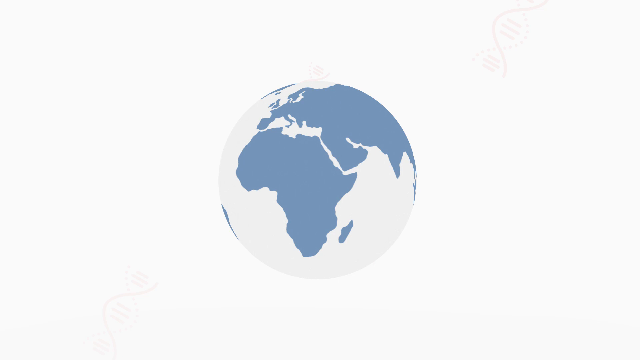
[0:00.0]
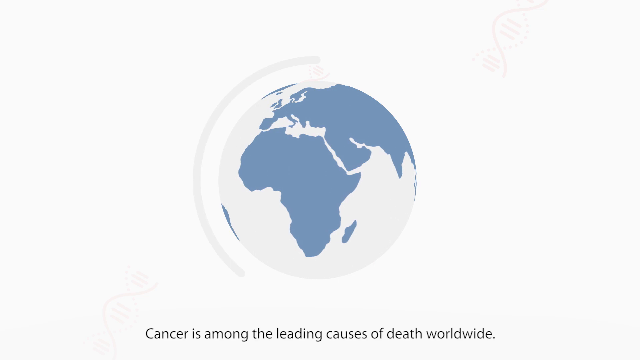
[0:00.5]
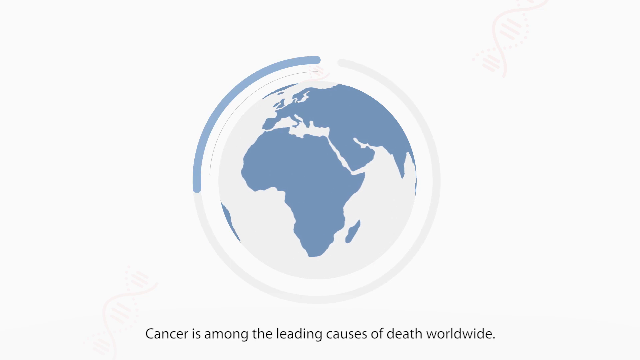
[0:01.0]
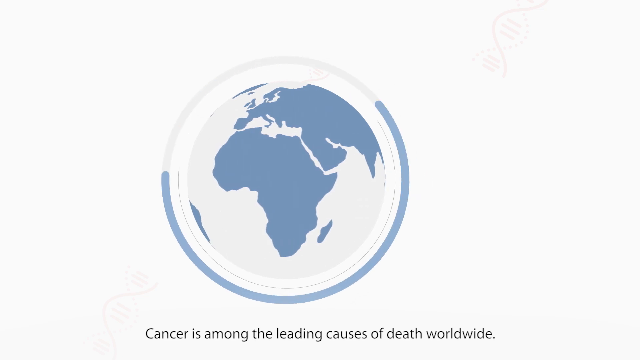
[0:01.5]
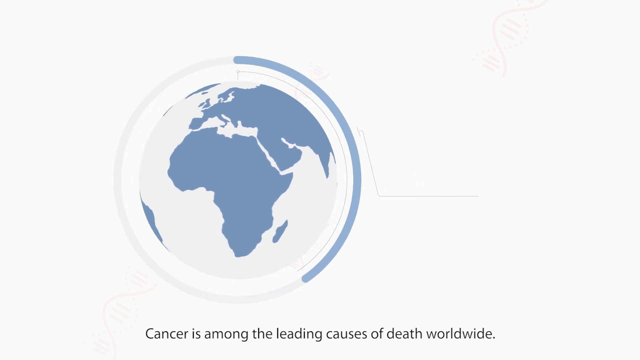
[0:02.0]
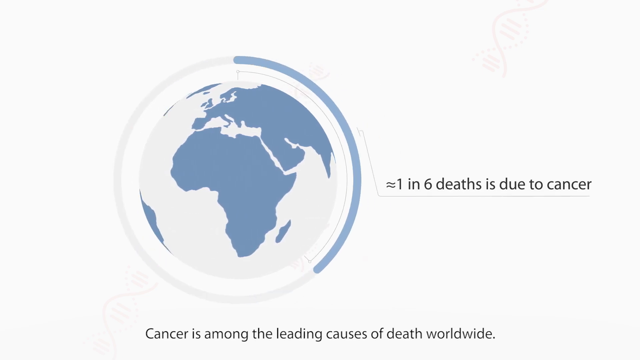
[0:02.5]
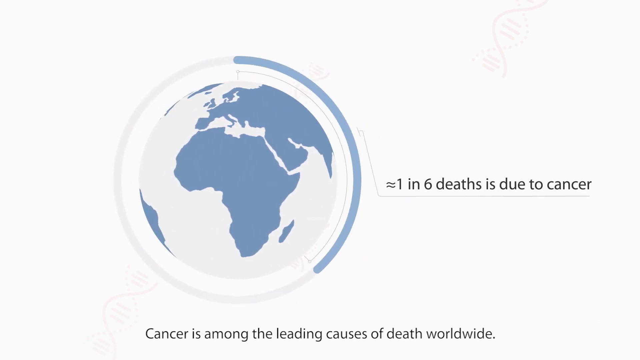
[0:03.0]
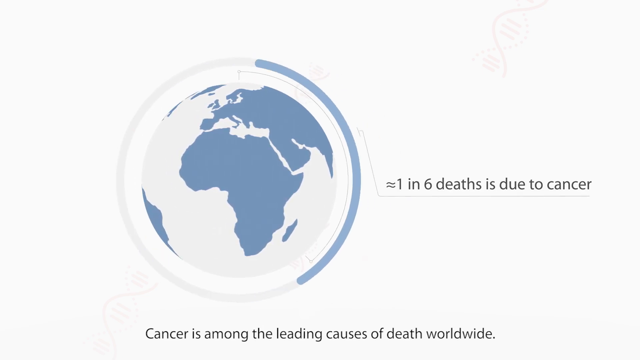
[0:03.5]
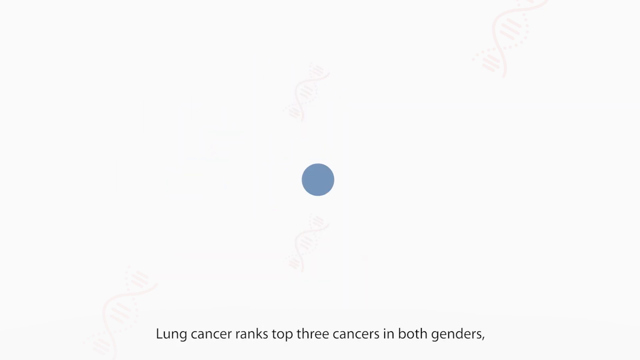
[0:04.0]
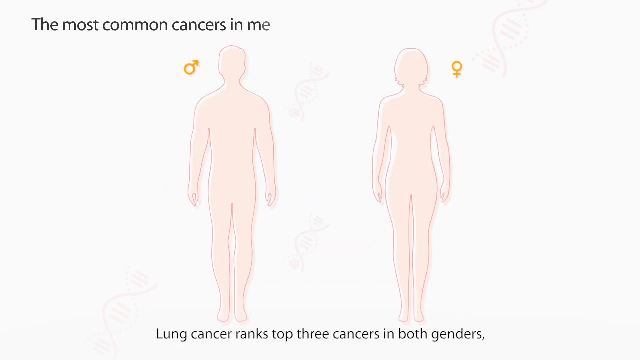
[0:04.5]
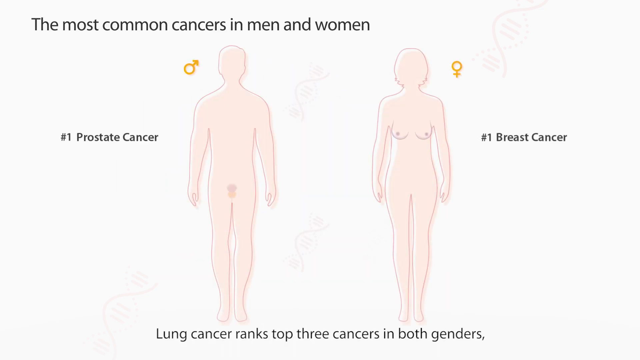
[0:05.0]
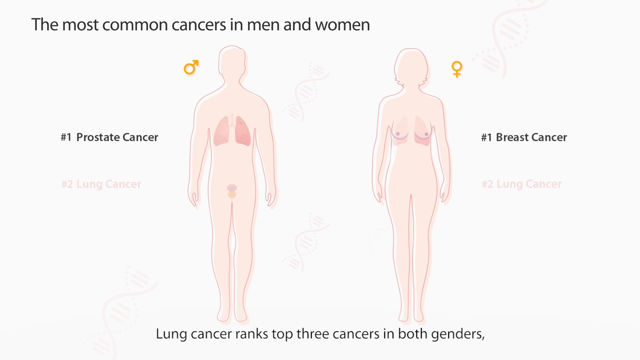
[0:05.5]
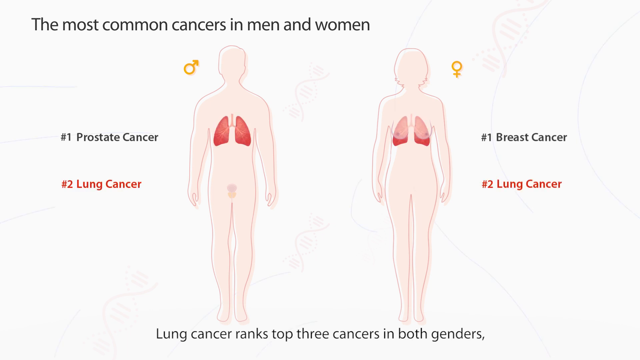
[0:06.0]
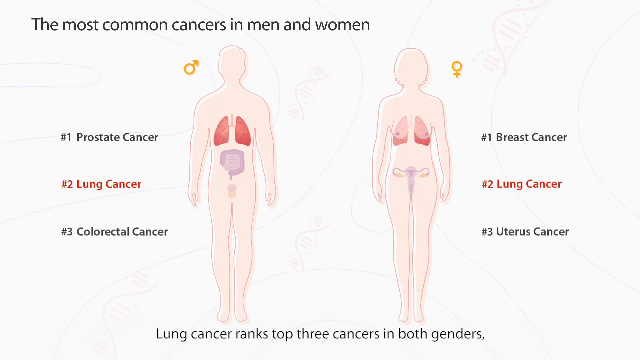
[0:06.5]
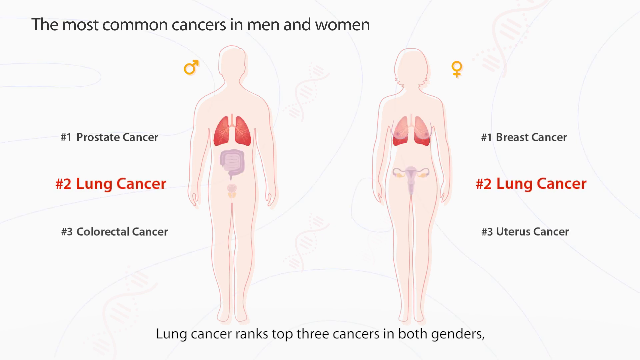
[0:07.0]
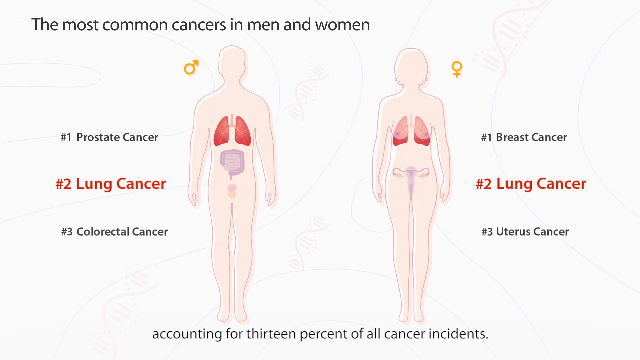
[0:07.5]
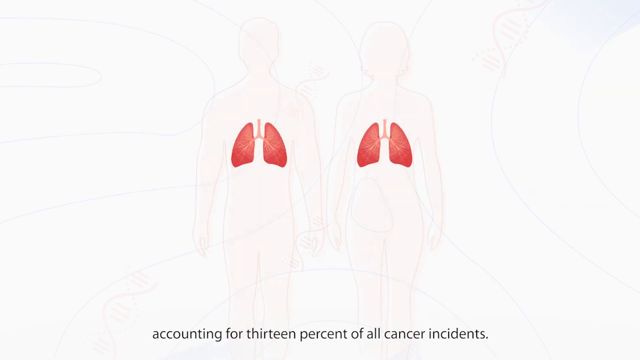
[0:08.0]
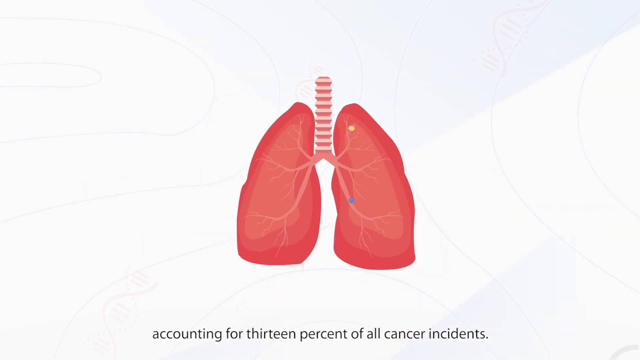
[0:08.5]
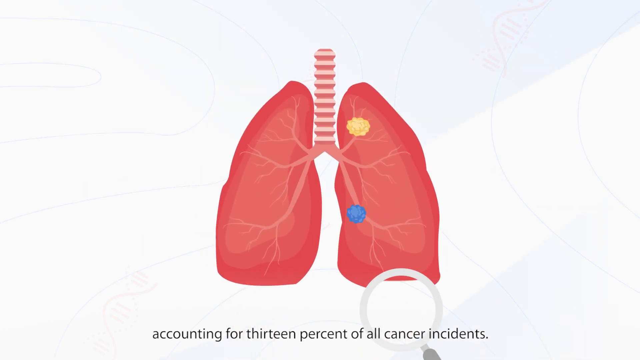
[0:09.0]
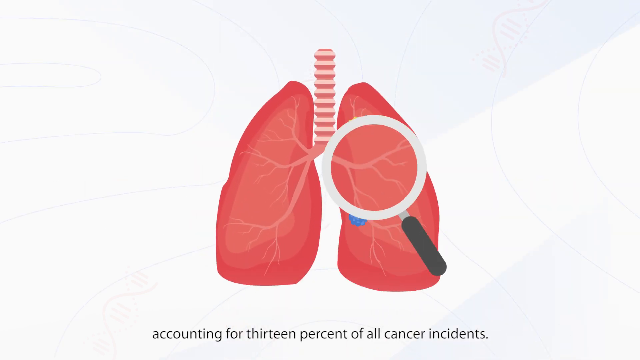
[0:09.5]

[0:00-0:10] An animated drawing of the globe appears in the centre of the screen, with the countries in blue and the sea in white. The globe slowly turns, replicating the way the earth turns. A white circle appears on the outside of the image and fills in about a third of the way. Text appears to the right of the earth reading "approximately one in six deaths is due to cancer", and at the bottom of the screen black text appears reading "cancer is among the leading causes of death worldwide". The earth gradually gets smaller and smaller until it is a dot, then moves off the screen to the right. It is replaced by two images of people: scientific drawings in which only the different organs are visible, a man on the left and a woman on the right. The text "the most common cancers in men and women" appears at the top left, above the man. The text "lung cancer ranks top three cancers in both genders" appears at the bottom centre, underneath both figures. To the left of the man, the text "number one prostate cancer, number two lung cancer, number three colorectal cancer" appears, with the lung cancer text in red. To the right of the woman, the text "#1 breast cancer, #2 lung cancer, #3 uterus cancer" appears, with the lung cancer text highlighted in red. The lungs in the figures begin to flash and then grow larger, while the bodies fade to the back and then out of the image. The two lungs get larger and merge together in the centre of the screen. A glass hovers over the lungs as if investigating, then focuses on an image of some cells in the left lung.